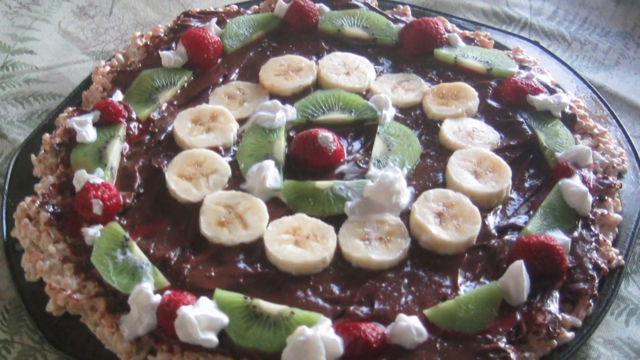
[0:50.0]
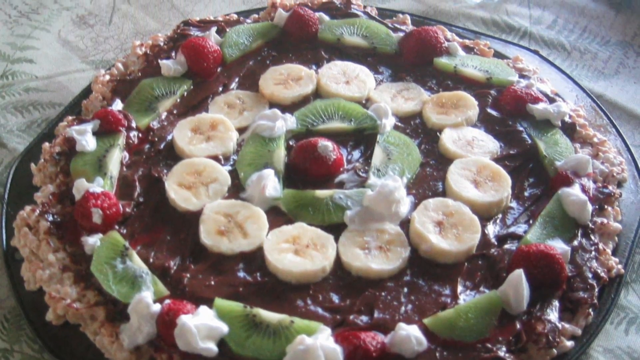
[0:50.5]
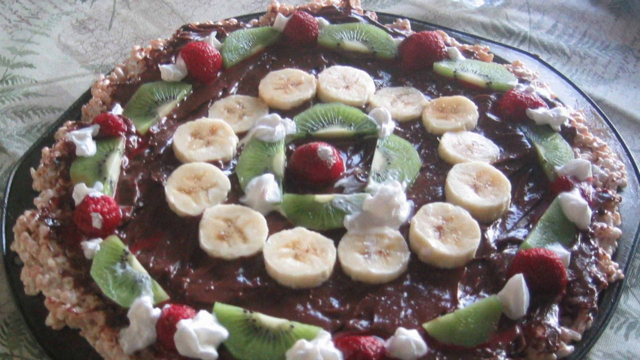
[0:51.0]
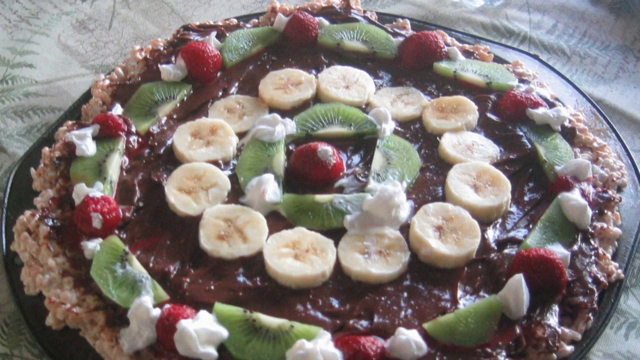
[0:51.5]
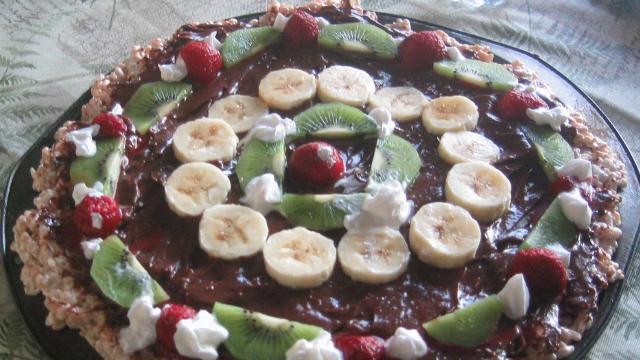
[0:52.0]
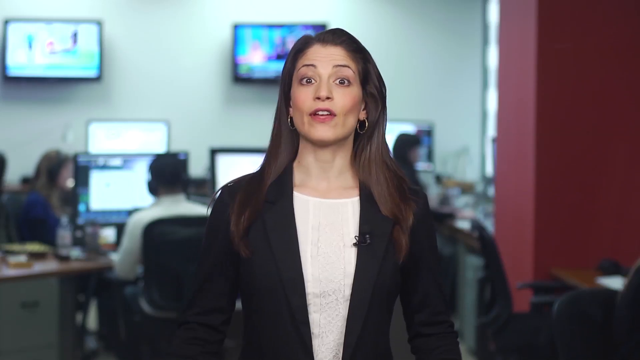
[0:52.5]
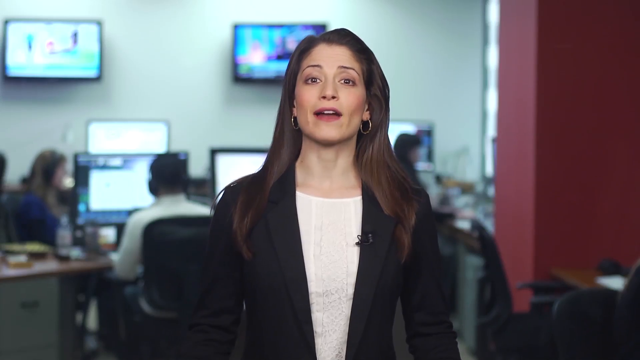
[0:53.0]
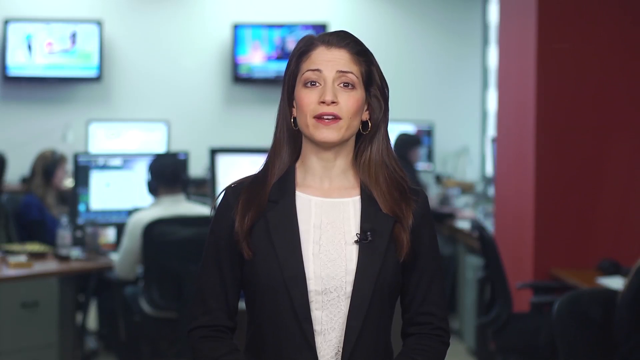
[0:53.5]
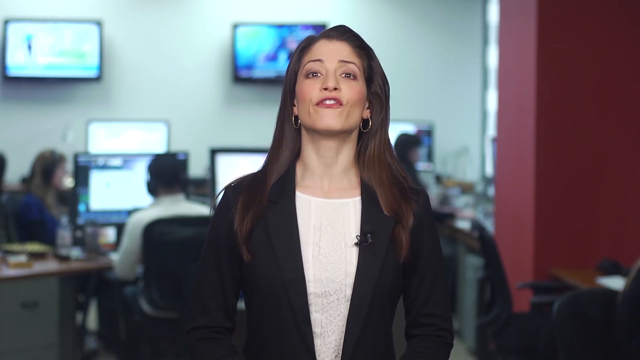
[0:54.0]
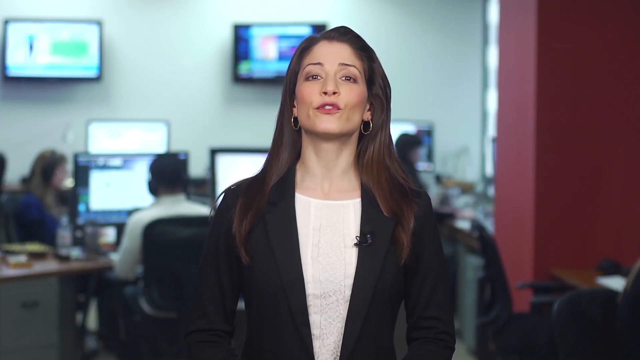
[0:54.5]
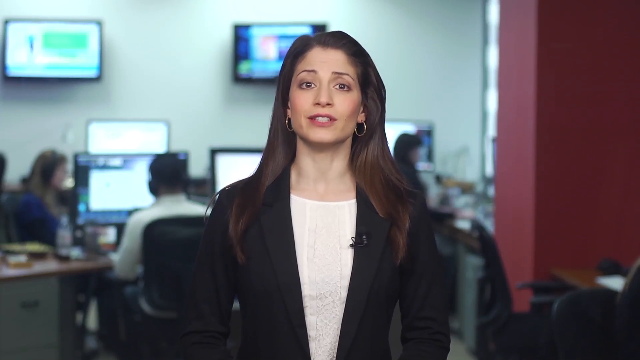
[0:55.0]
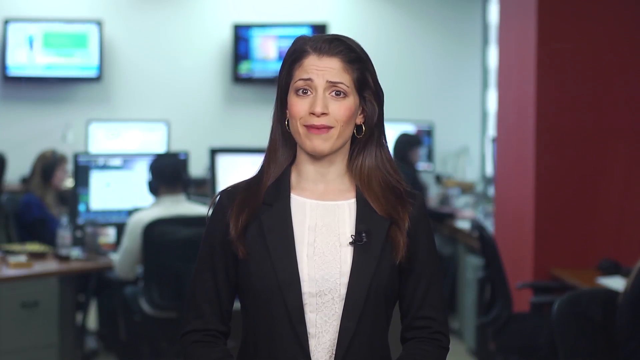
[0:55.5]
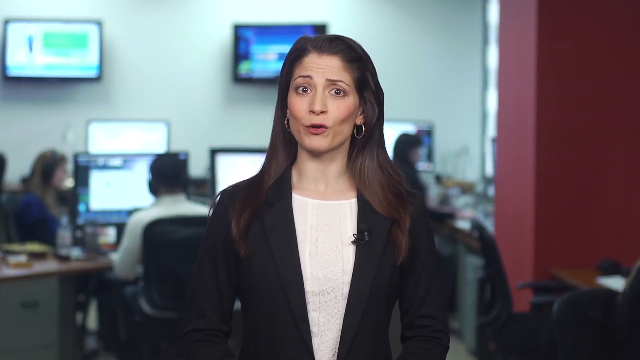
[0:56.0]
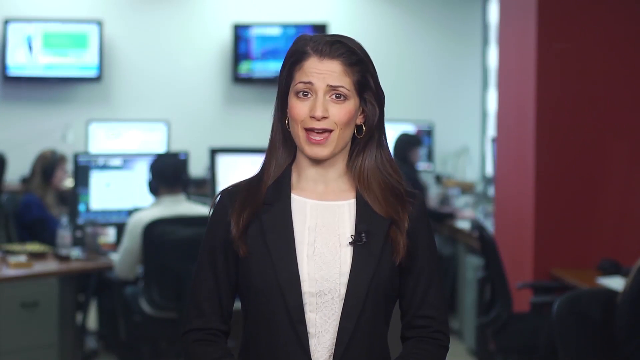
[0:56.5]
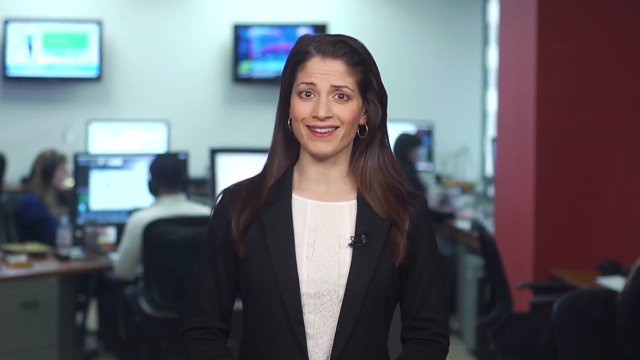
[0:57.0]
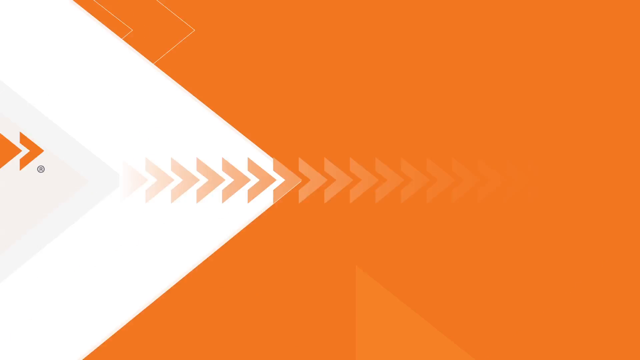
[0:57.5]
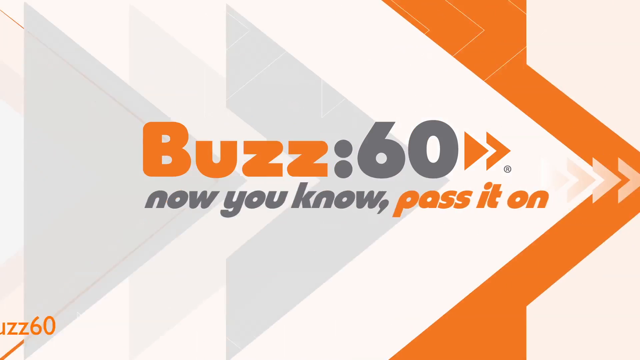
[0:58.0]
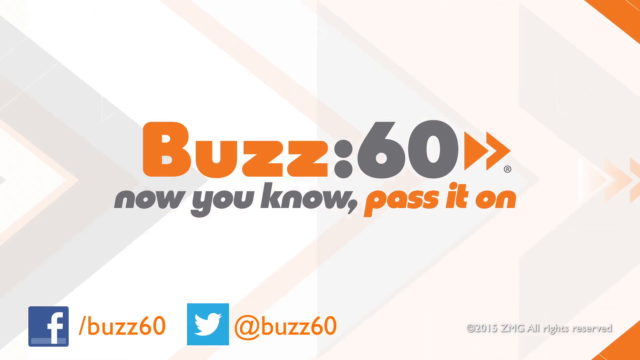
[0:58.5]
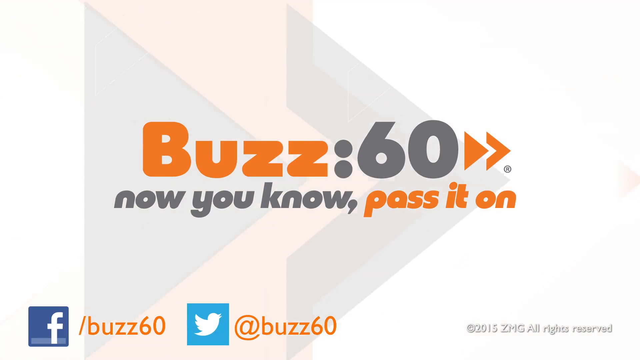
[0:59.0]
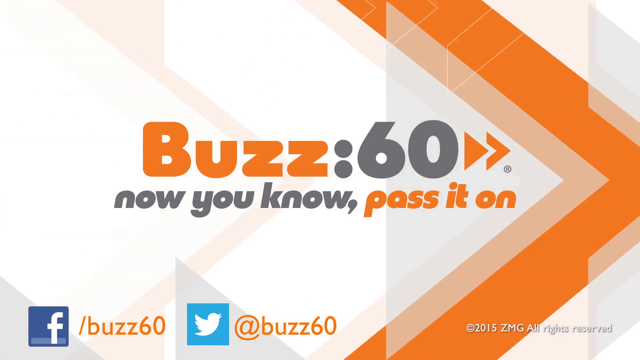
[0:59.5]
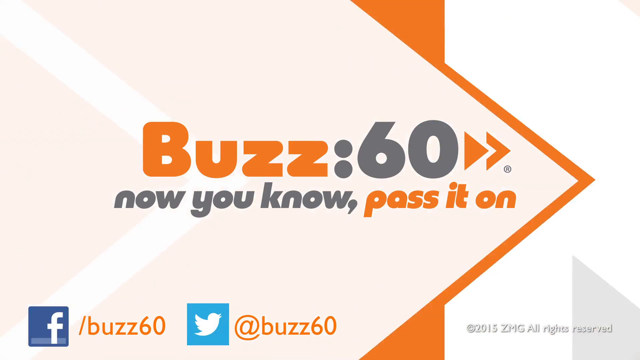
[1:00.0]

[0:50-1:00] Sliced bananas and sliced kiwi sit on a crust with a chocolate, syrupy base. It is on a plate and is round. The screen moves up to show it. The video then goes back to the reporter, who seems to be talking fast. TVs are in the background, and somebody is working on a computer back there. She wears a black jacket with a white shirt and is smiling. The Buzz 60 logo passes on screen.